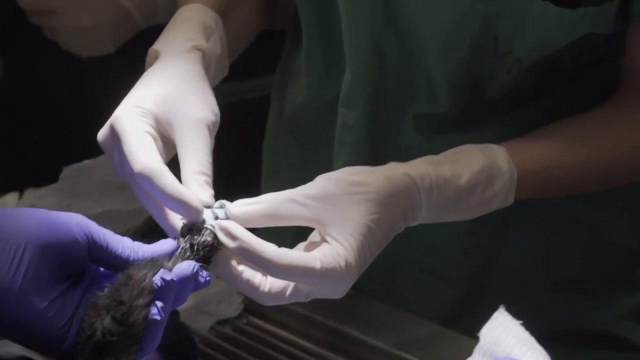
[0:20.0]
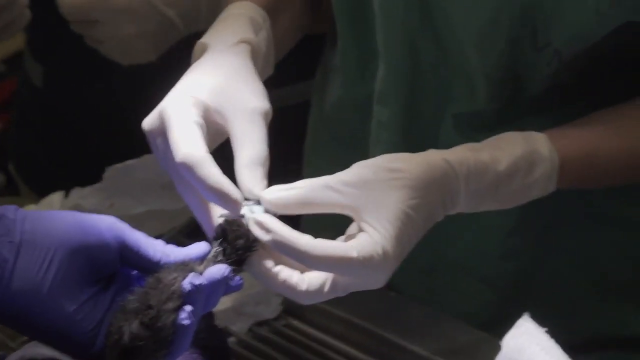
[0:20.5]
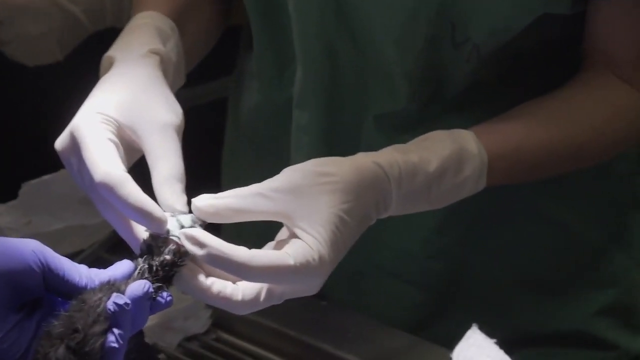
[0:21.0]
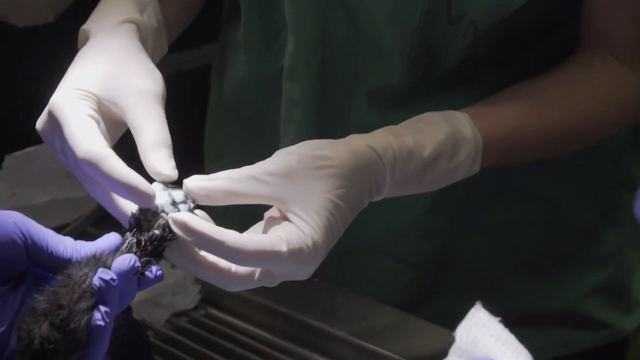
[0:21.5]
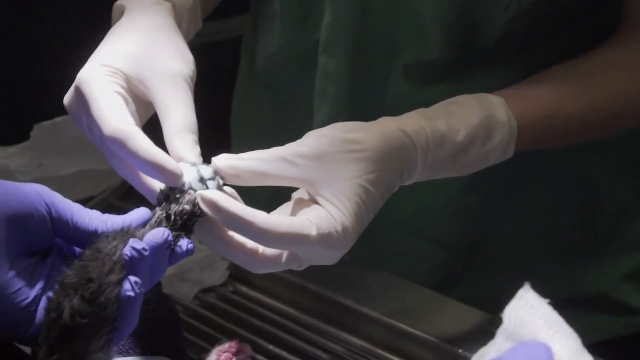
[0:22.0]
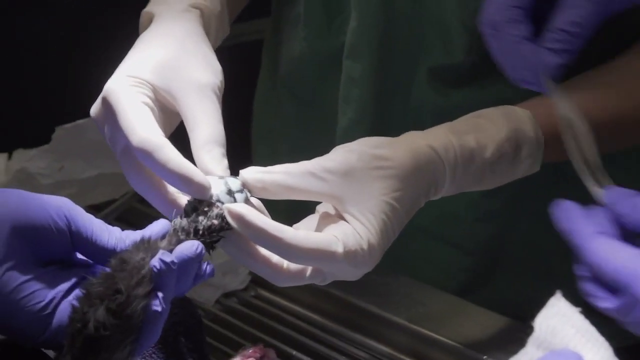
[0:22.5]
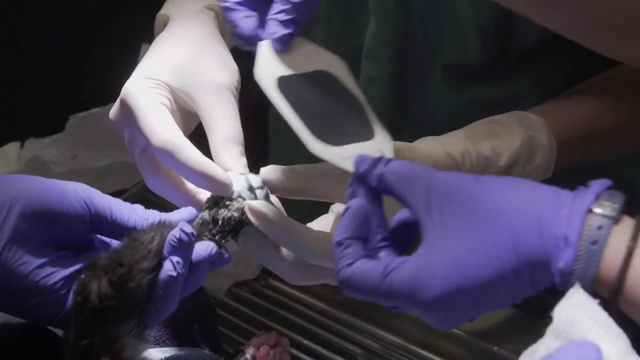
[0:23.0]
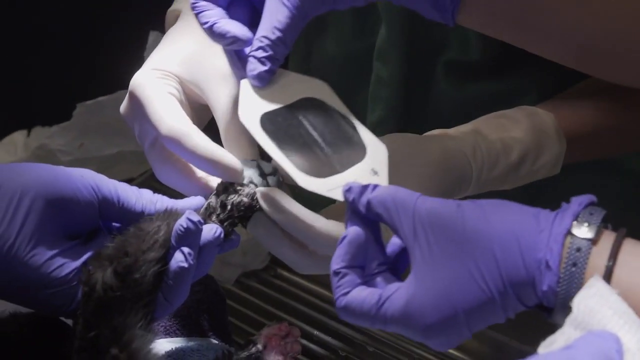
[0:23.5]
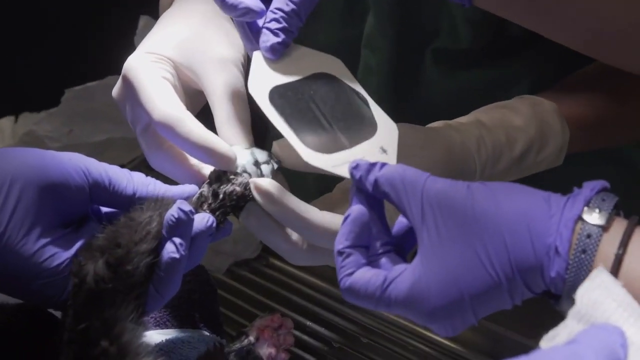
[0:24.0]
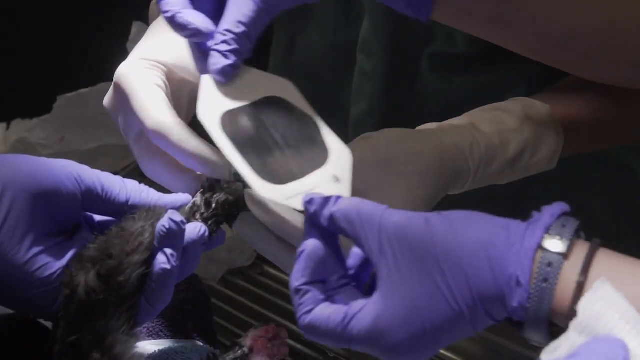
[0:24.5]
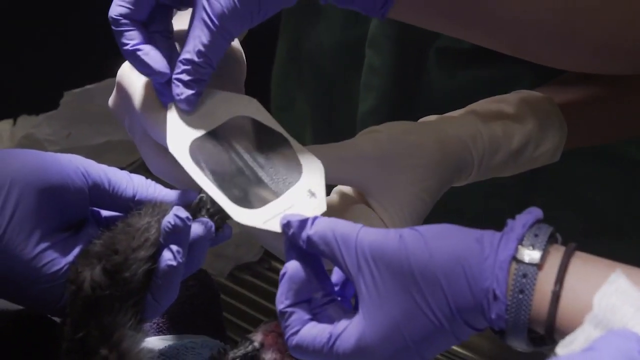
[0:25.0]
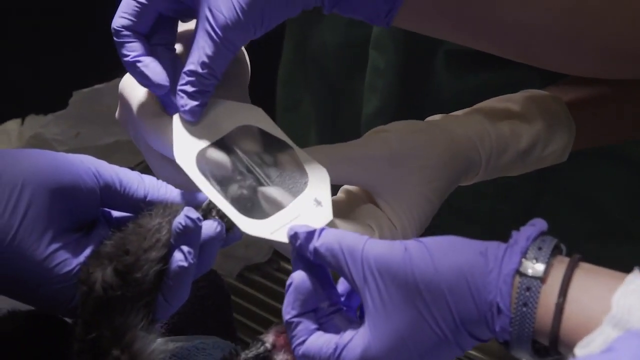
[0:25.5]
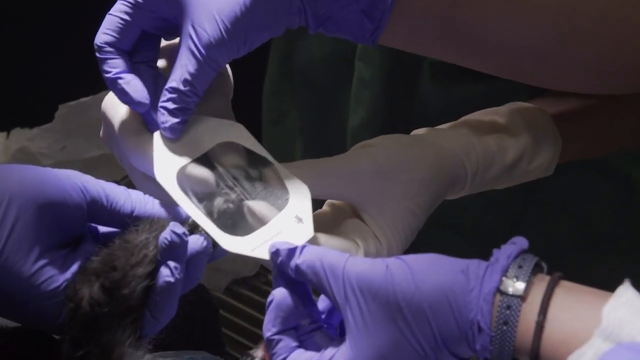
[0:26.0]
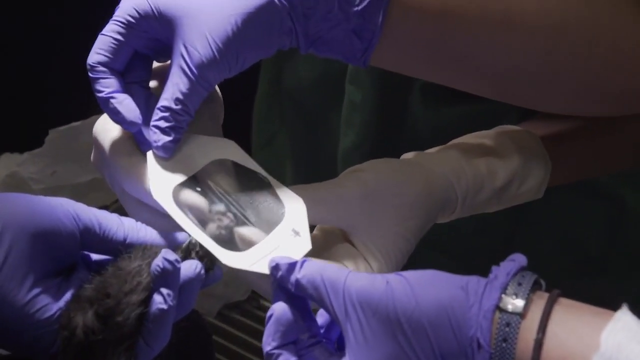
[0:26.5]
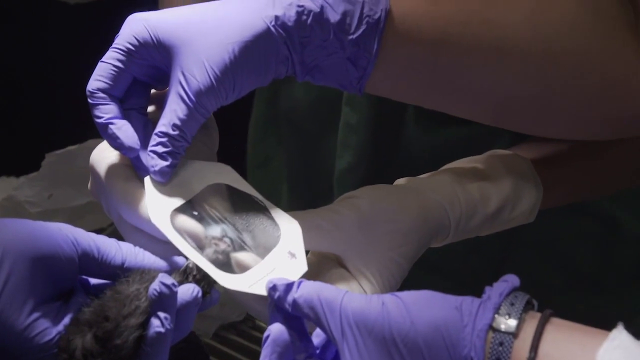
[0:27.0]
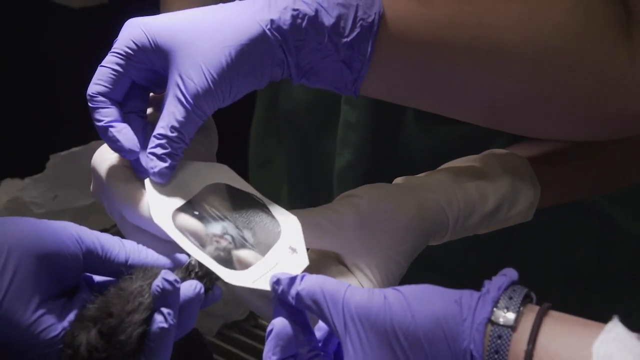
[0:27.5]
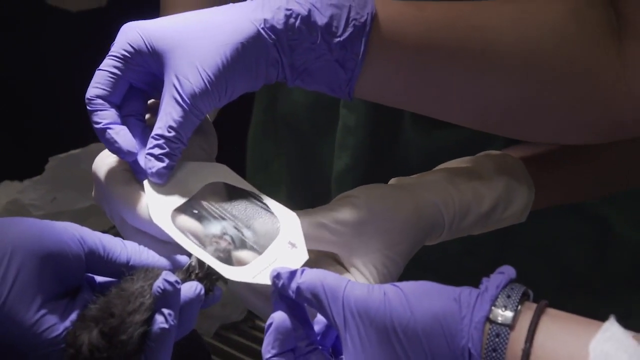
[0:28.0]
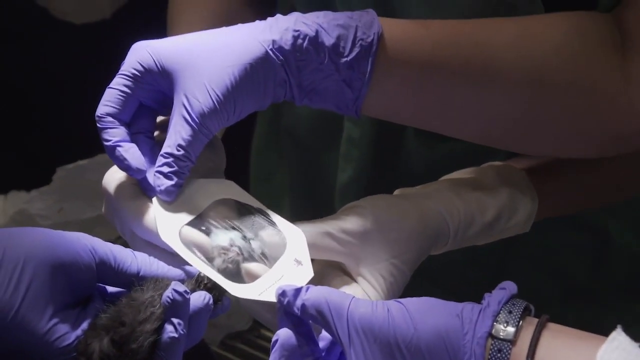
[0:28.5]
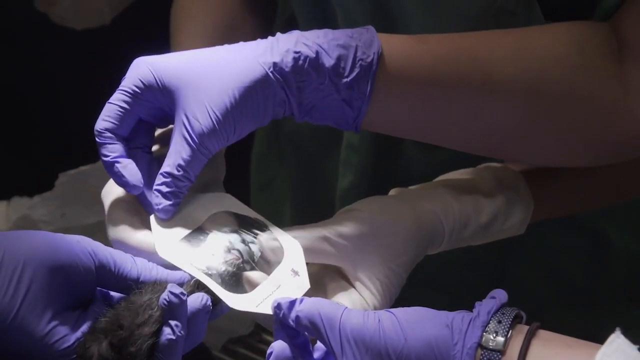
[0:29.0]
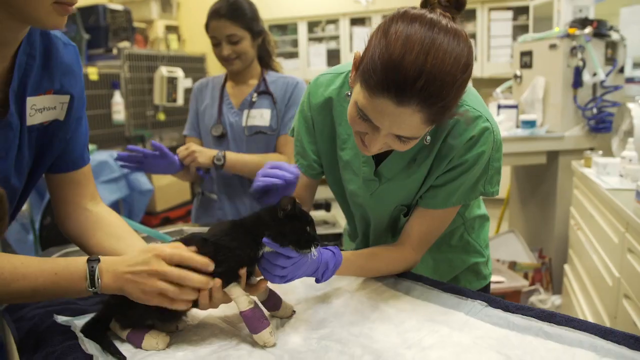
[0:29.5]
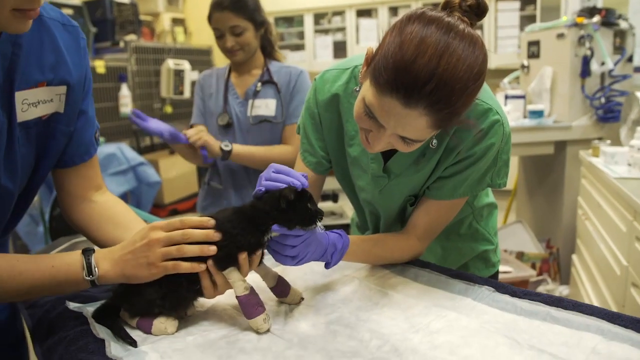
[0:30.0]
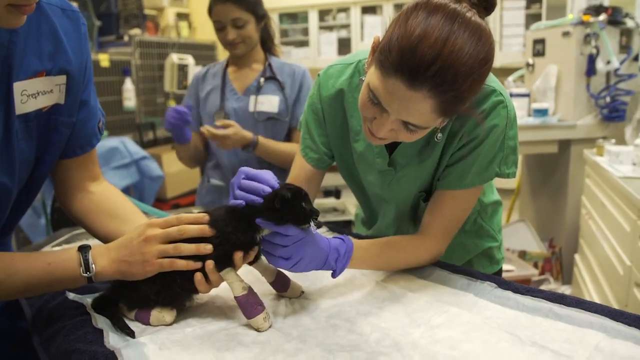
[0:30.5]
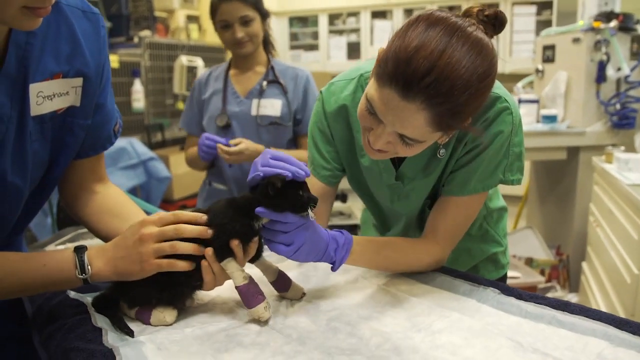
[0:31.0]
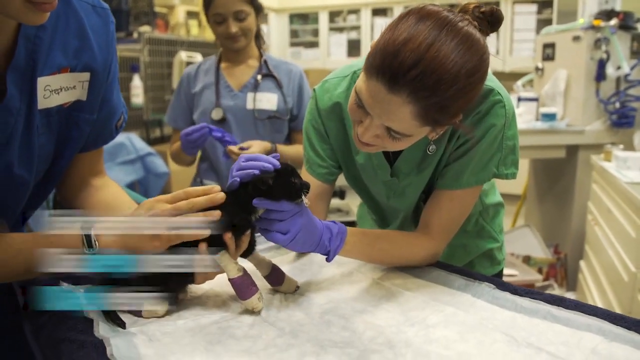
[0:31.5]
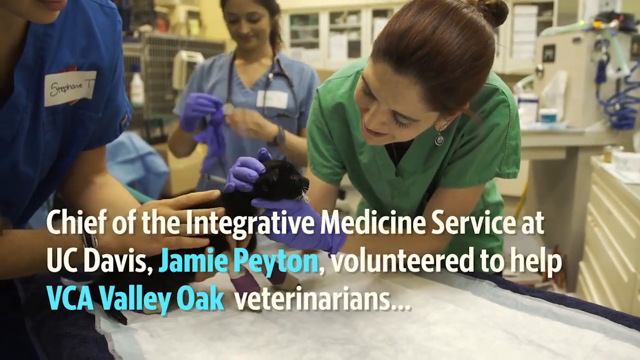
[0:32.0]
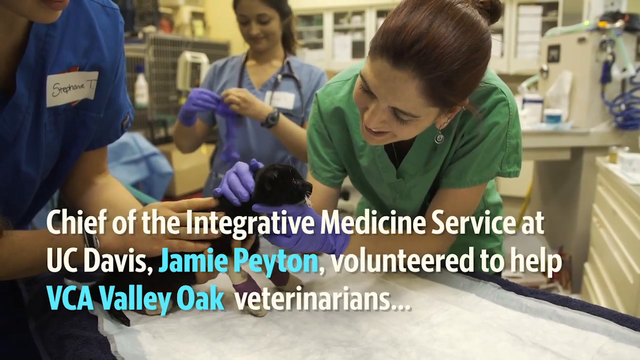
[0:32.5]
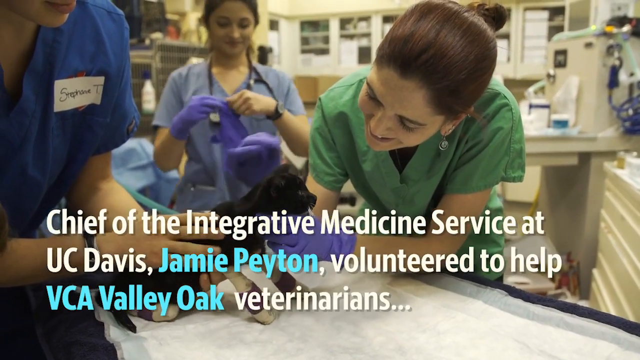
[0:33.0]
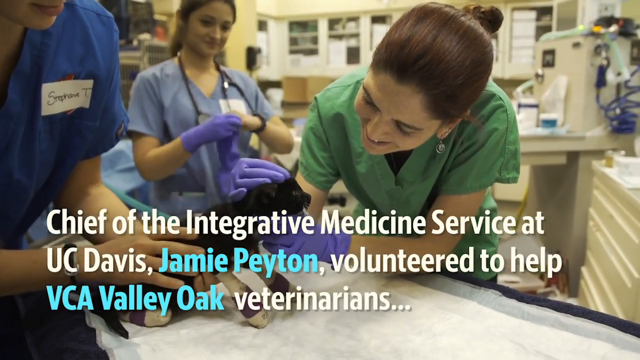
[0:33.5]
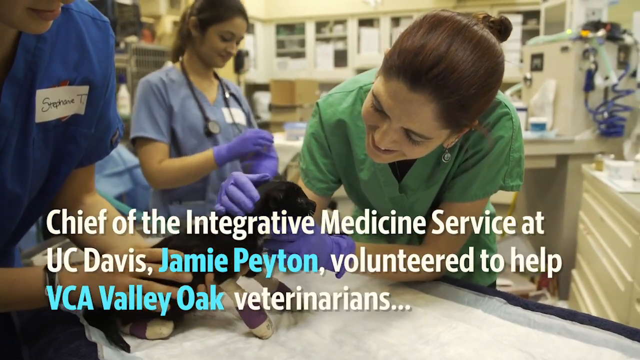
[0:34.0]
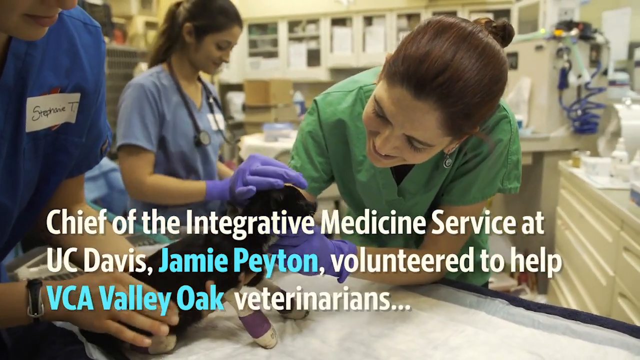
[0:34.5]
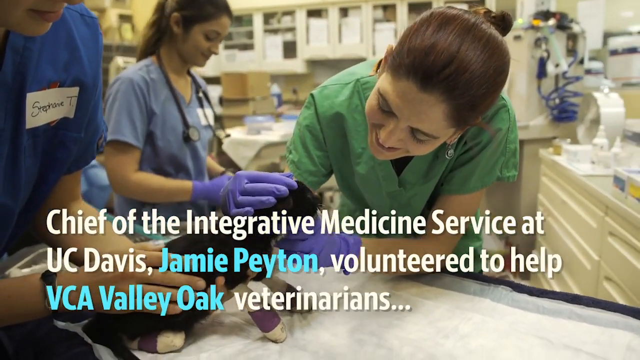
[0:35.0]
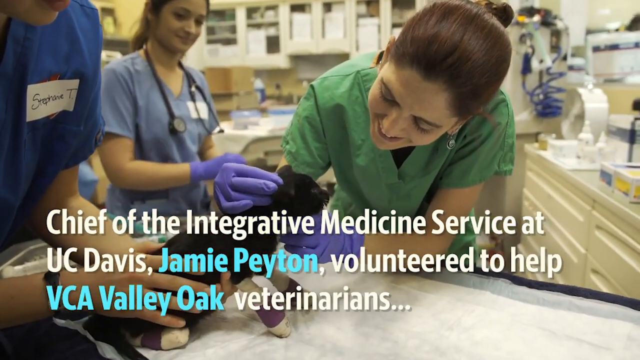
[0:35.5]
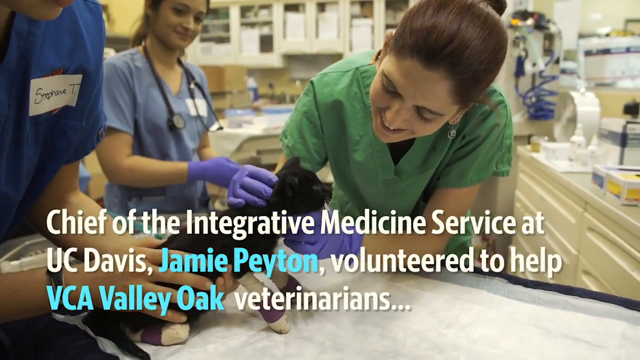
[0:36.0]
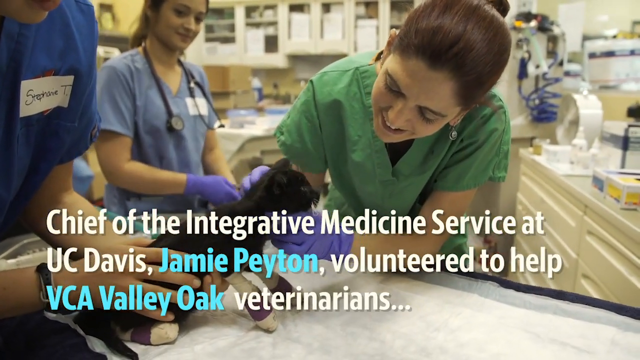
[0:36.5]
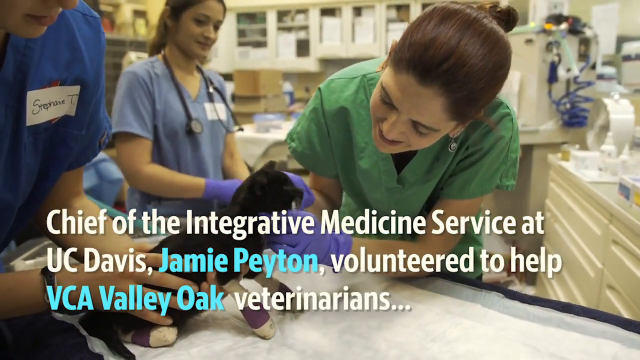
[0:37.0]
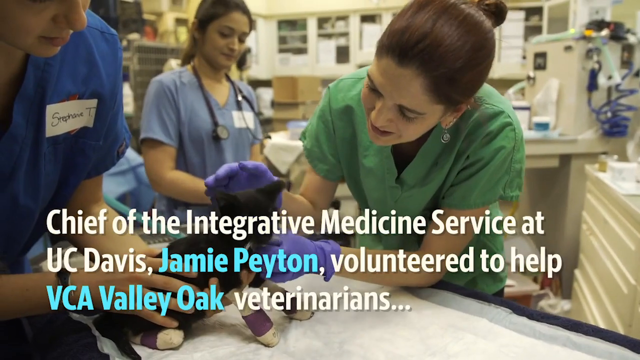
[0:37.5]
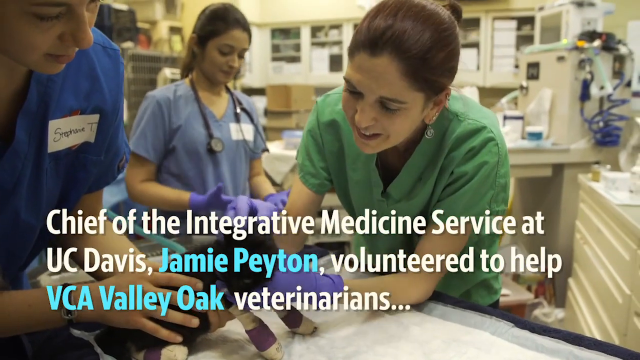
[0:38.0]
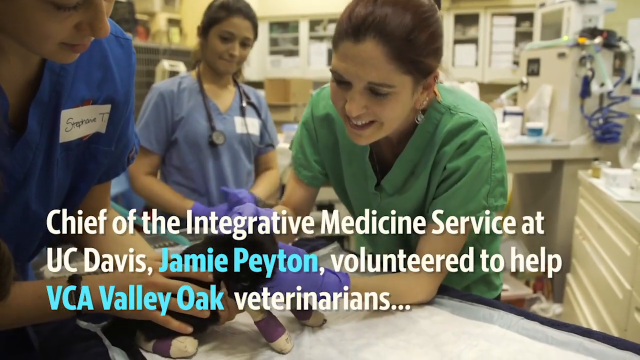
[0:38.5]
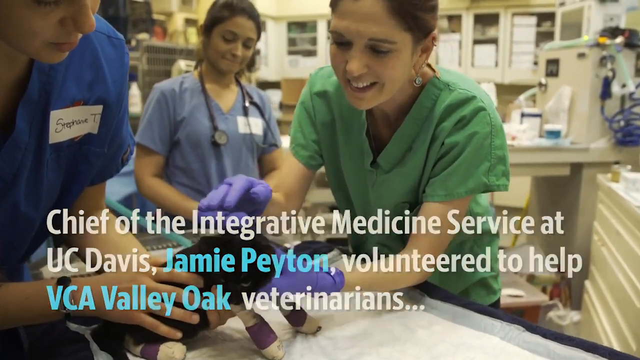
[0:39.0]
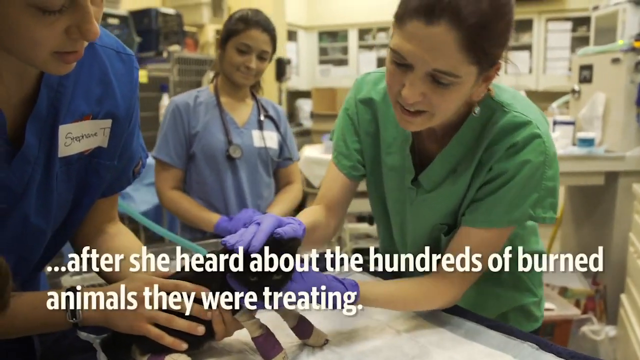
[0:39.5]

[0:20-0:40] A zoomed-in shot shows a member of the medical staff in white latex gloves holding the paw of some type of animal, which is then revealed to be a cat. Text reads: "Chief of the Integrative Medicine Service at UC Davis, Jamie Payton, volunteered to help VCA". The medical professional wears a green scrub and rubs the cat. More text reads: "after she heard about... hundreds of burnt animals they were treating." Three women who work in the veterinary office wear different colored scrubs: one dark blue, one light blue, and the main woman featured in the video light green. She also wears earrings. The woman in light blue scrubs wears a stethoscope, and the two women in blue scrubs have white name tags on their shirts.